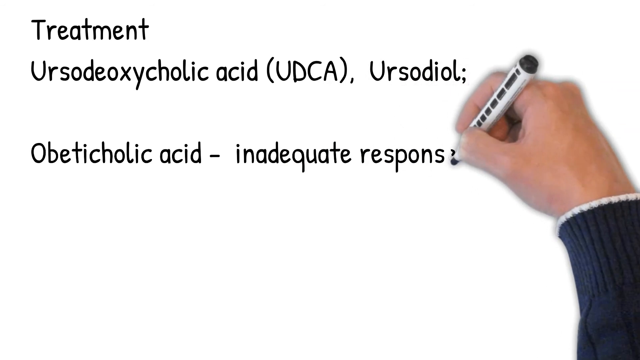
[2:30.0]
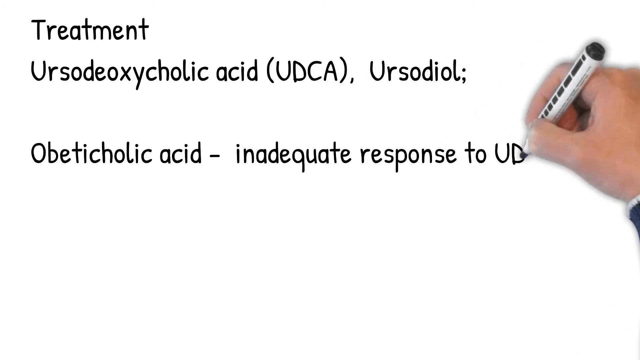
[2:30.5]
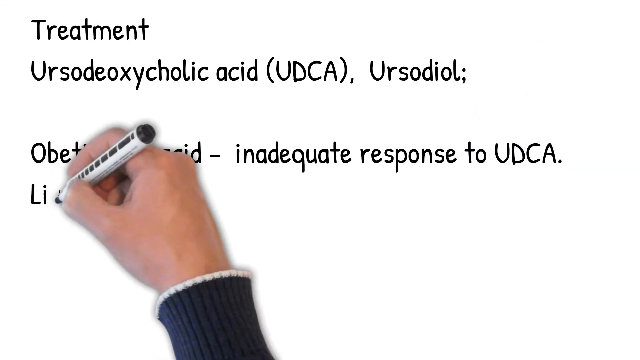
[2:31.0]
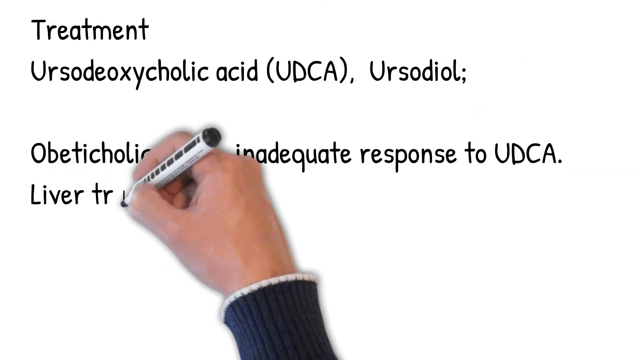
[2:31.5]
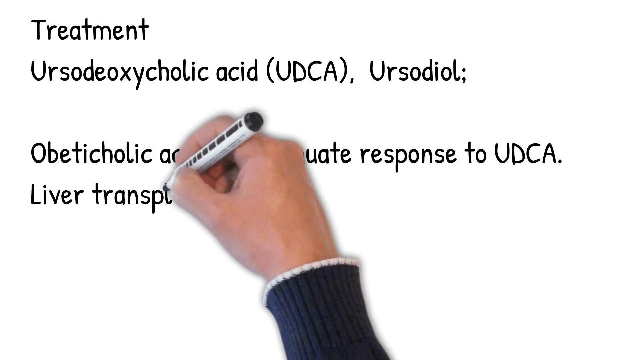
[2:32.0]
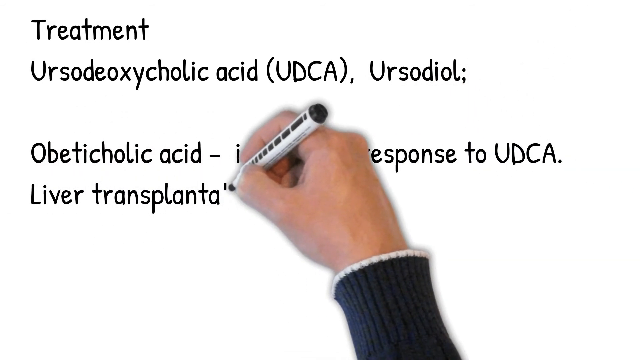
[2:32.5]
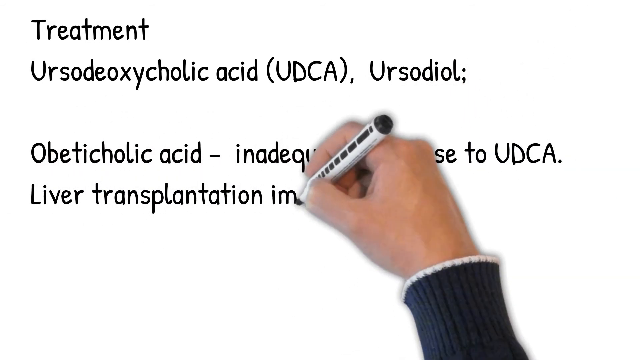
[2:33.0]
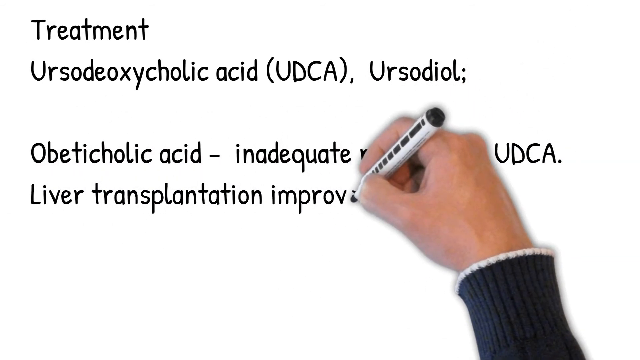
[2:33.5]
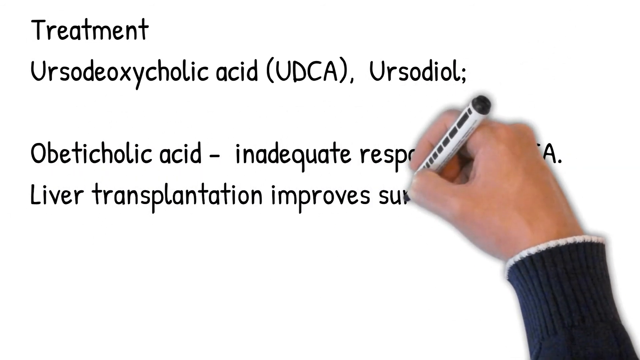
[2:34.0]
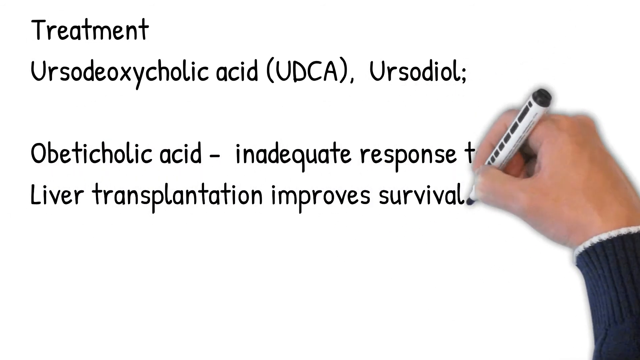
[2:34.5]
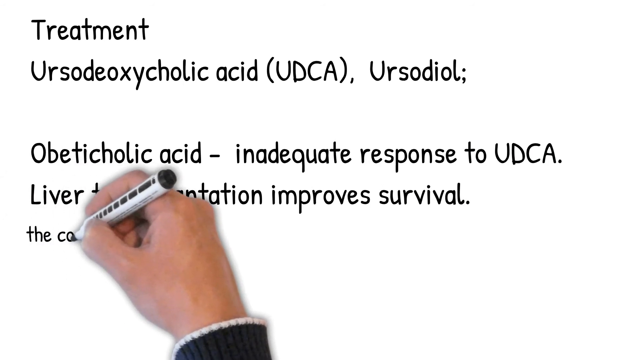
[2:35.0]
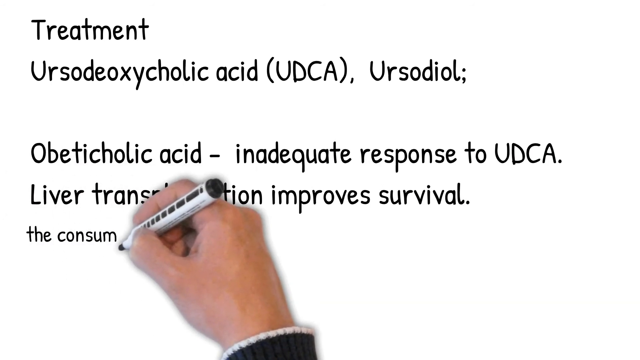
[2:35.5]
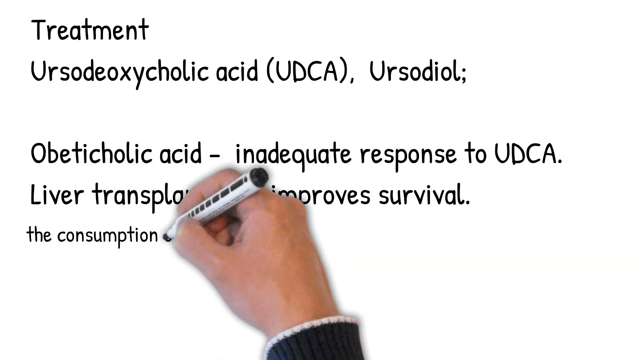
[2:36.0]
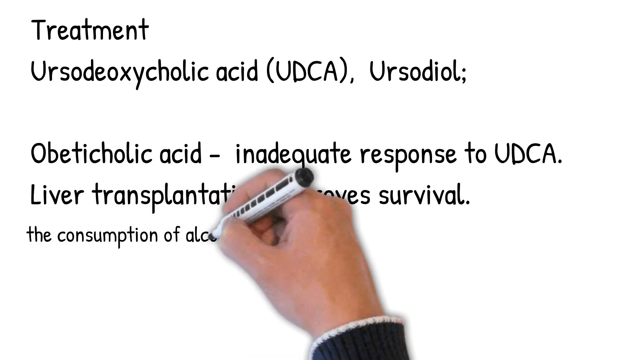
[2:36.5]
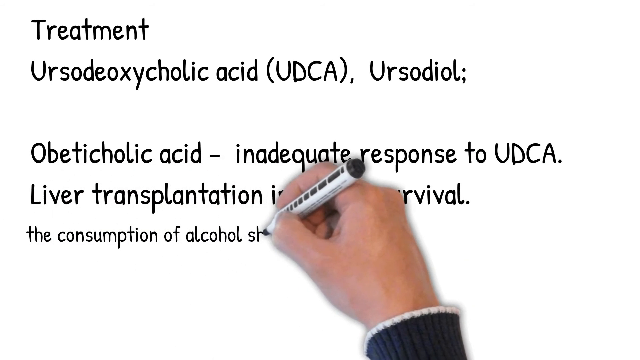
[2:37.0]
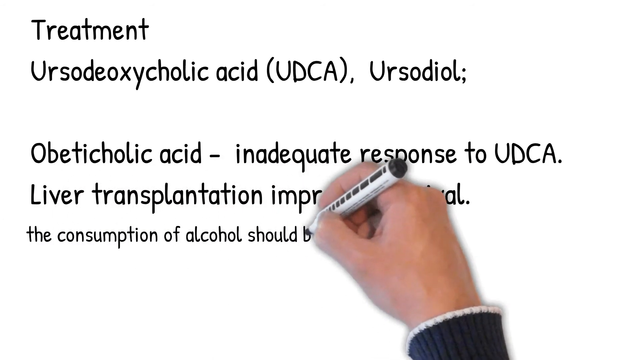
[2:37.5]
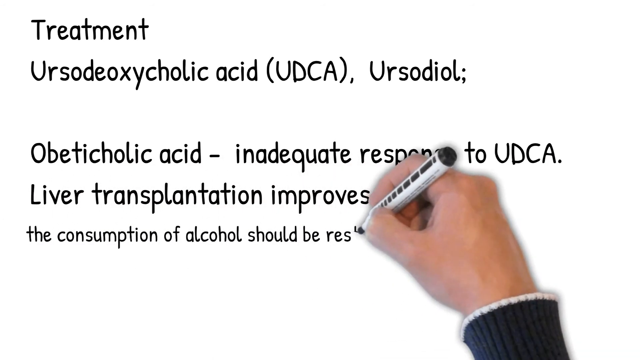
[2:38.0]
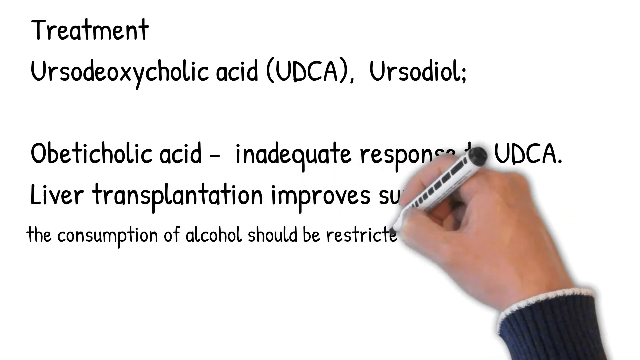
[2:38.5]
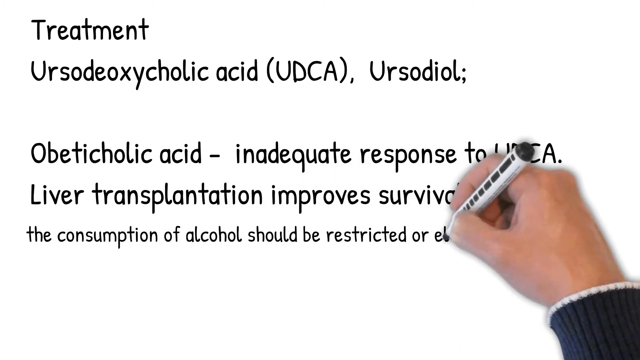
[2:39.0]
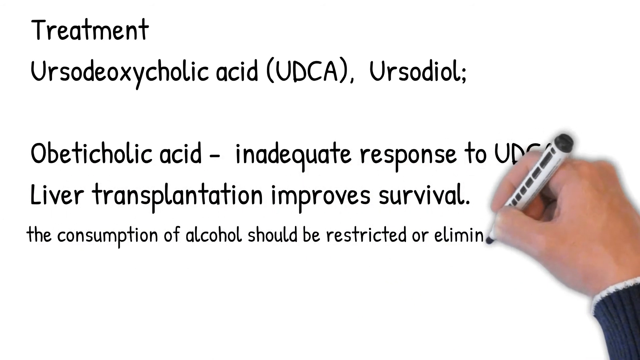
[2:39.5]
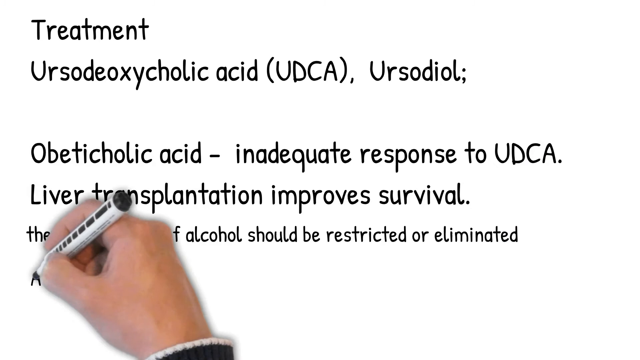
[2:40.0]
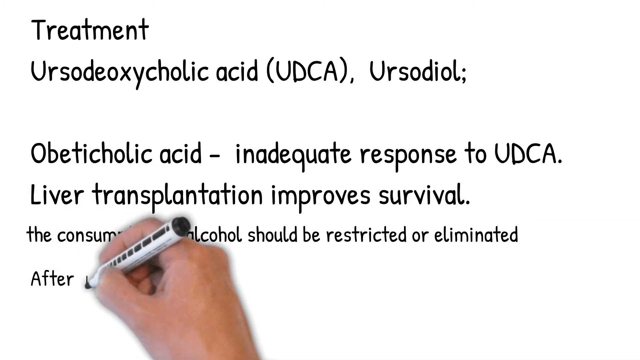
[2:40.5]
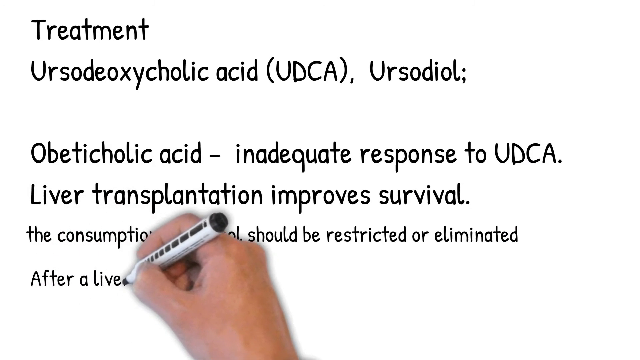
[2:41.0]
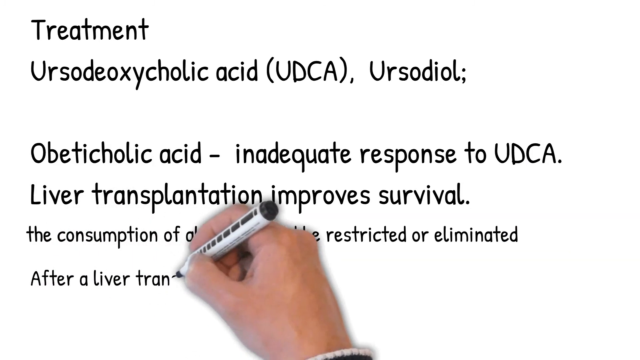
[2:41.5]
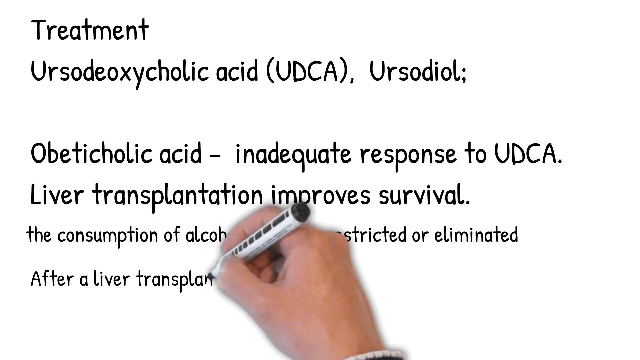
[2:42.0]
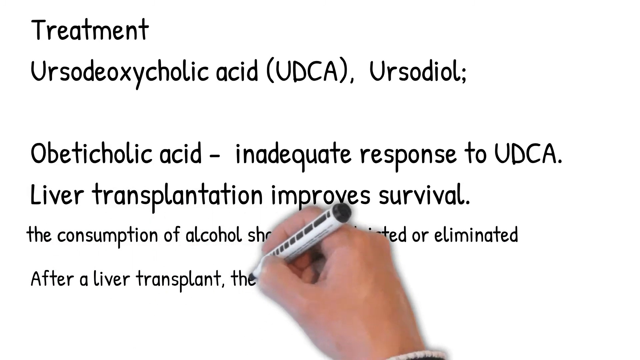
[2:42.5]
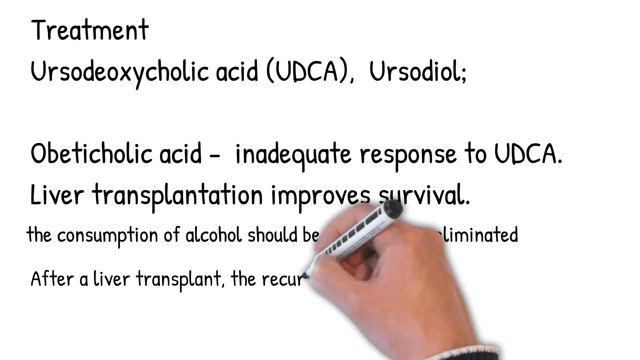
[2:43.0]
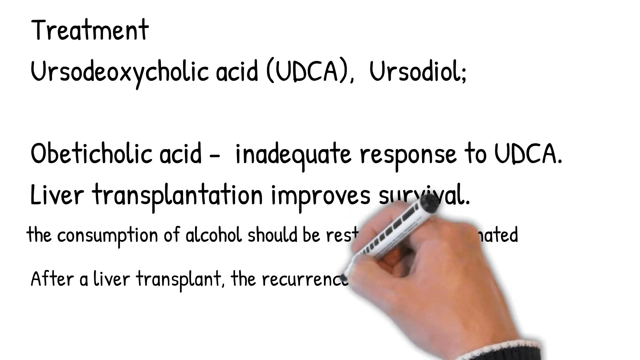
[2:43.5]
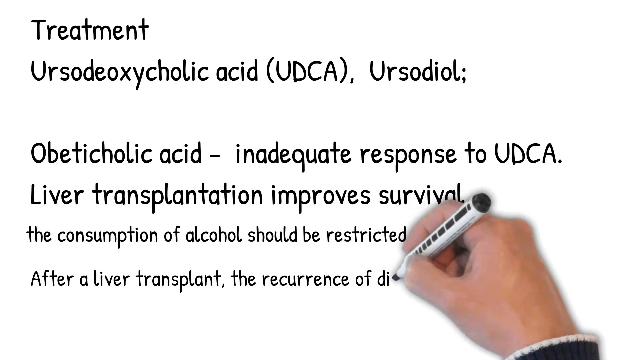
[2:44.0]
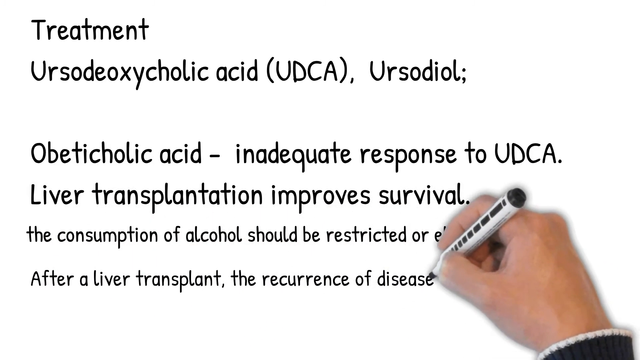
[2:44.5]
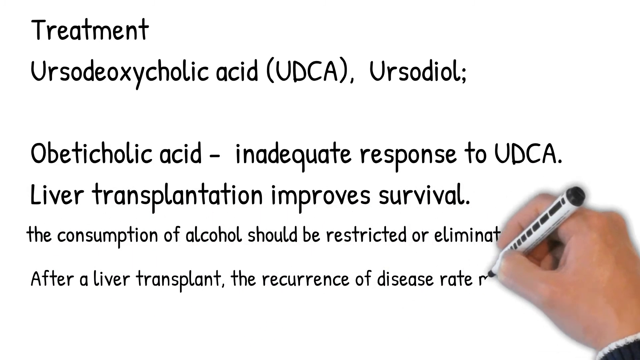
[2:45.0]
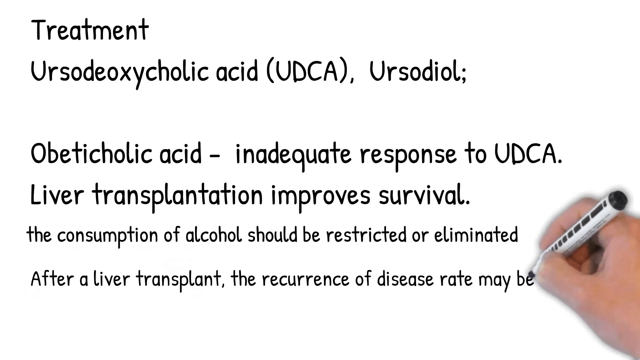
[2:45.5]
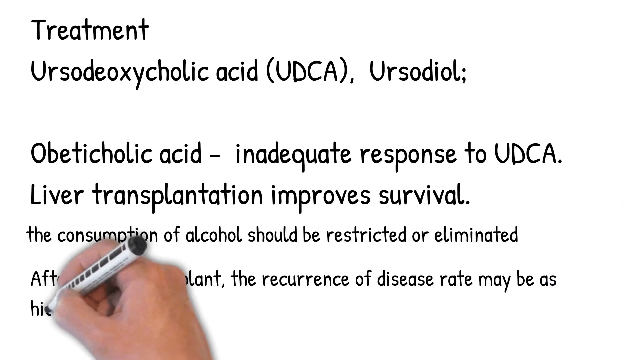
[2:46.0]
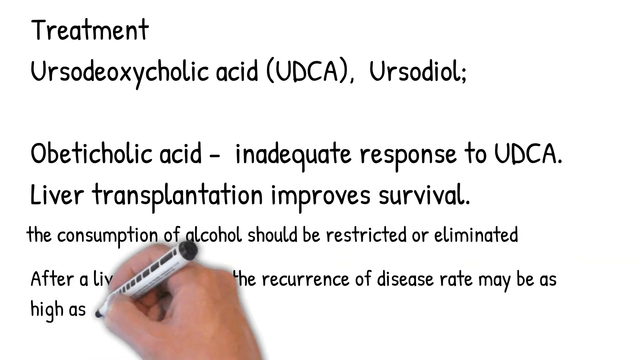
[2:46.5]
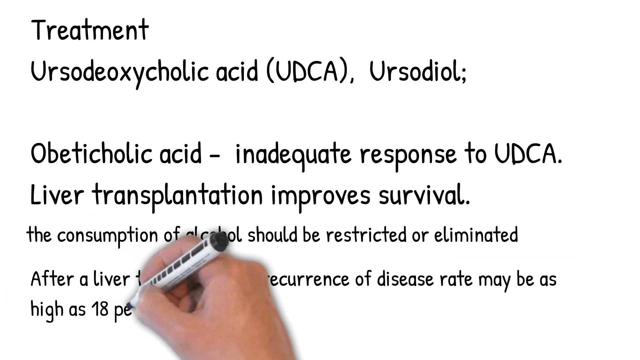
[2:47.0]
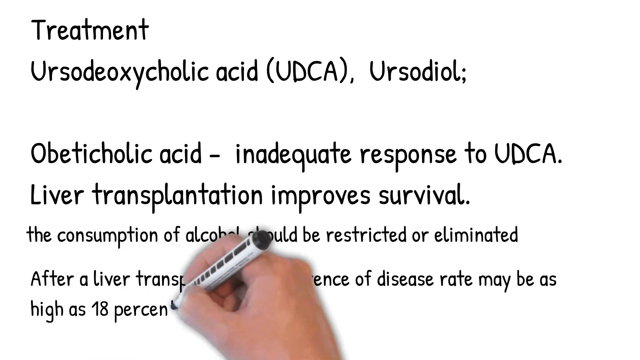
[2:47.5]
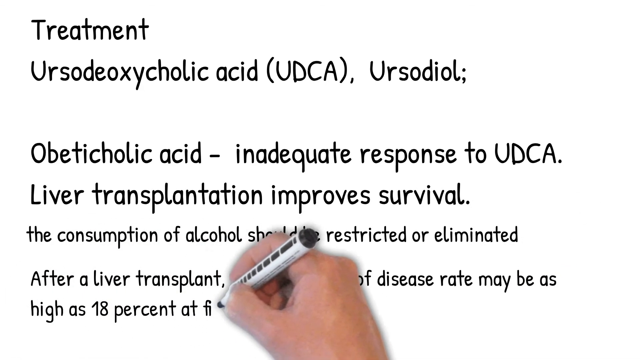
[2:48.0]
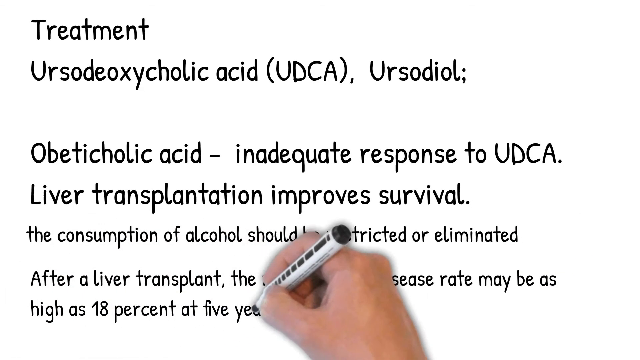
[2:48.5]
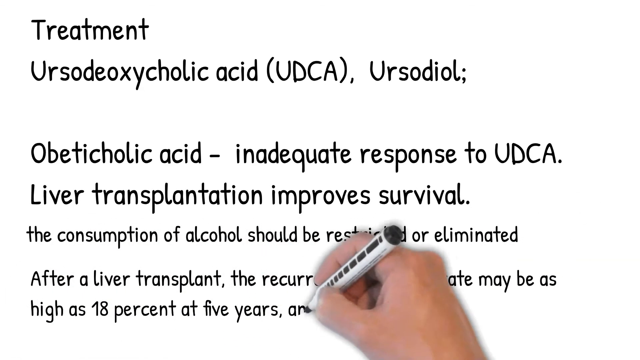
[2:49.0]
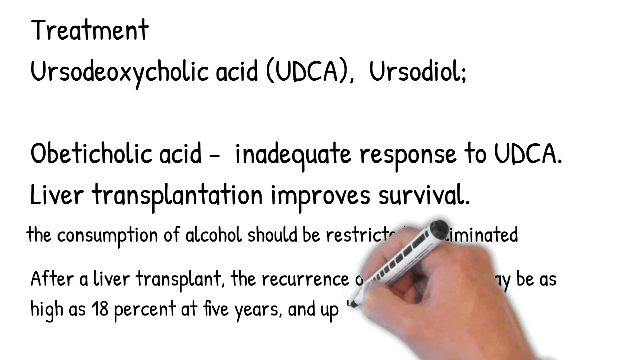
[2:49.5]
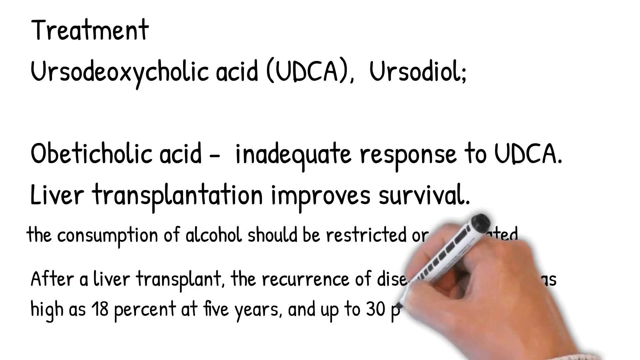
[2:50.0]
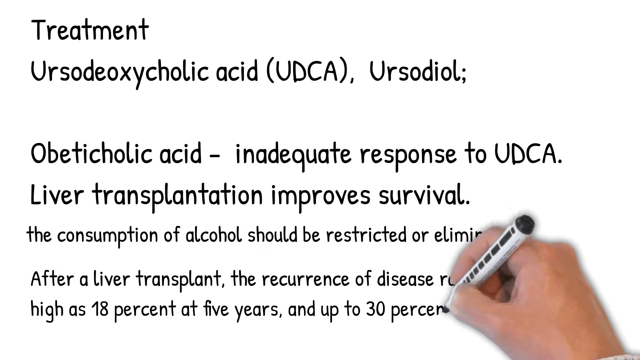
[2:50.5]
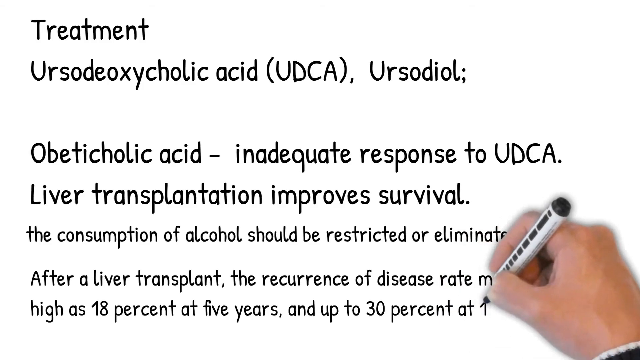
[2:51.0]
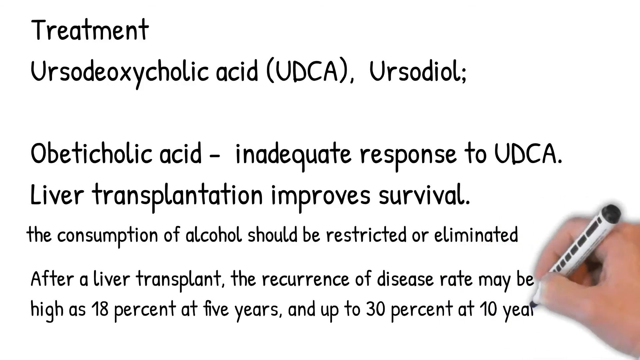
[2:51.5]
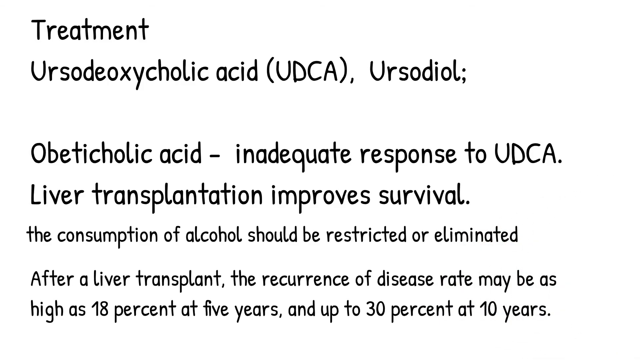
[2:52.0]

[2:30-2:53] A Caucasian male's right hand draws on a white background. He holds a white marker with a black tip, black end and black writing, and wears a long-sleeved charcoal gray sweater with a white band along the wrist. The whiteboard is mostly white and gray across the very bottom. The writing is in black text in Comic Sans. In the upper left corner it reads "treatment" and "urso deoxycholic acid (udca)". Beneath that it reads "inadequate response to udca" and "liver transplantation improves survival". Beneath that, in smaller text: "the consumption of alcohol should be restricted or eliminated after a liver transplant. the recurrence of disease rate may be as high as 13% at five years or as great as 30% in 10 years." The writing gets progressively smaller down the board, largest at the top and smallest at the bottom, where it reads "high as 13% at five years and up to 30% at 10 years" for the recurrence of disease rate.